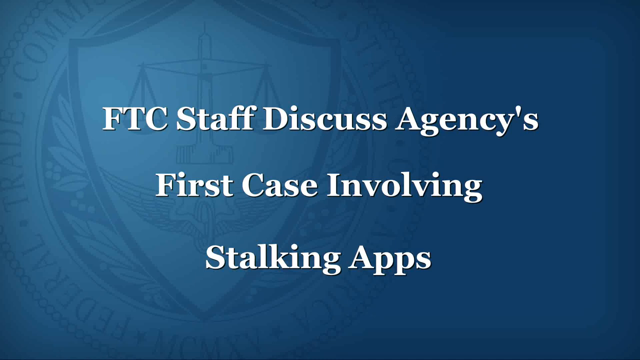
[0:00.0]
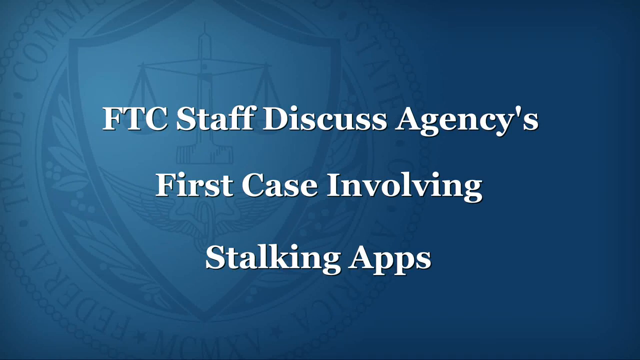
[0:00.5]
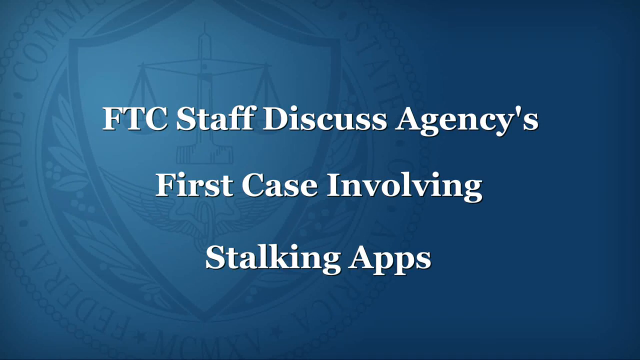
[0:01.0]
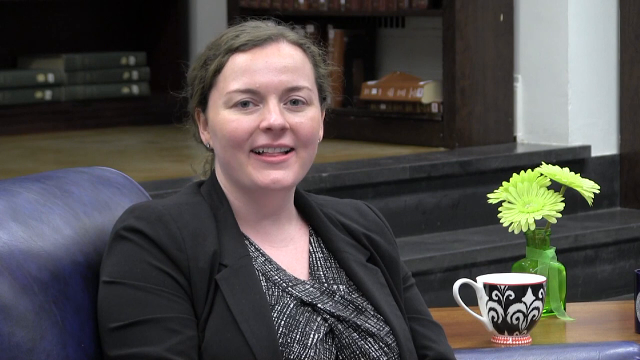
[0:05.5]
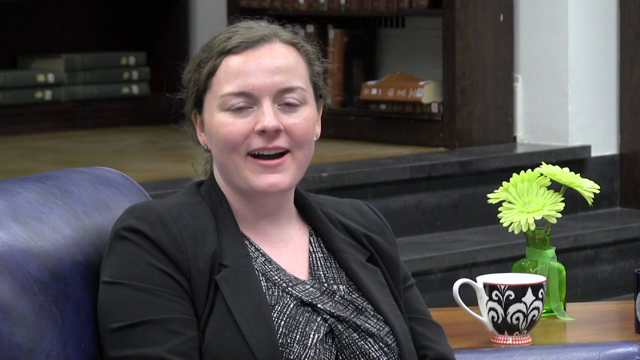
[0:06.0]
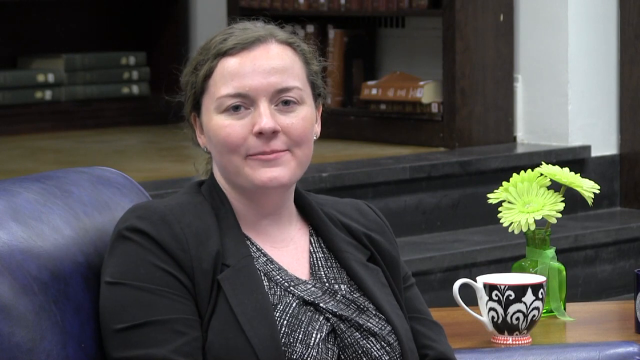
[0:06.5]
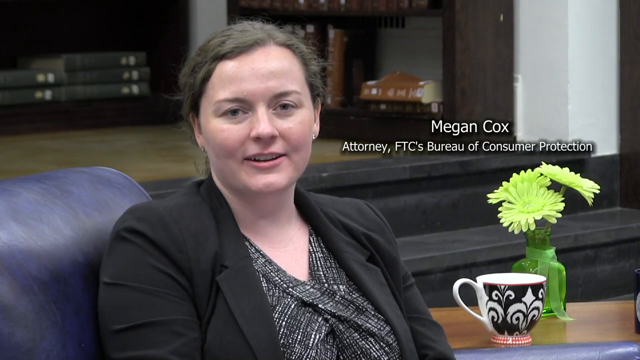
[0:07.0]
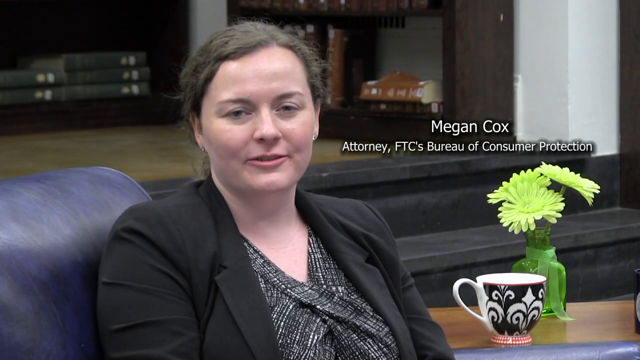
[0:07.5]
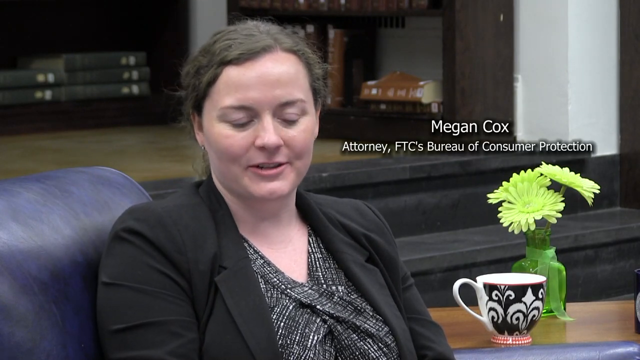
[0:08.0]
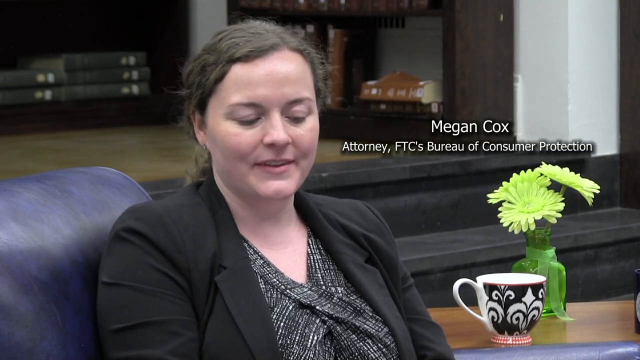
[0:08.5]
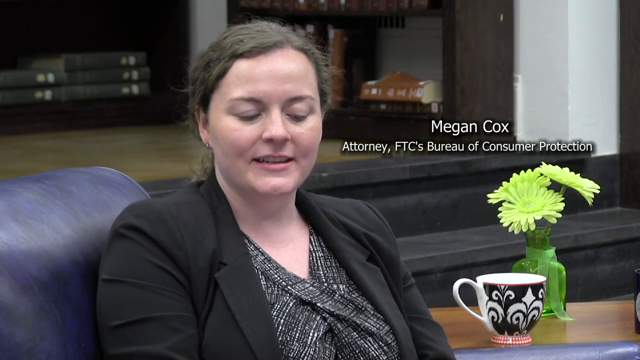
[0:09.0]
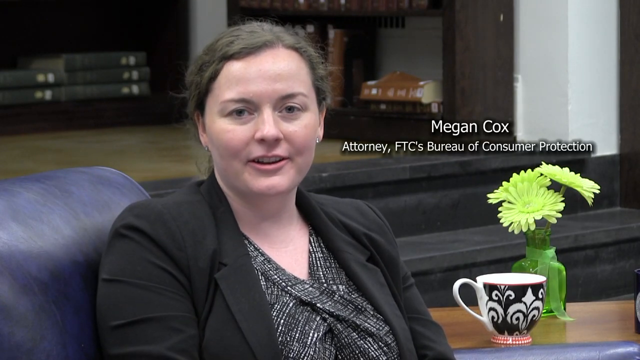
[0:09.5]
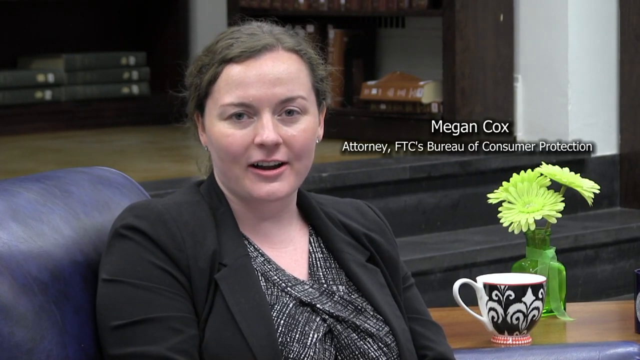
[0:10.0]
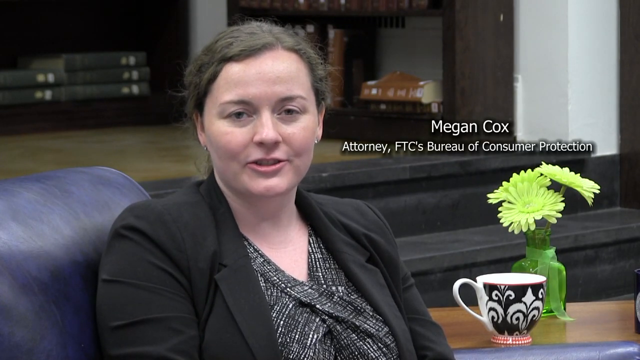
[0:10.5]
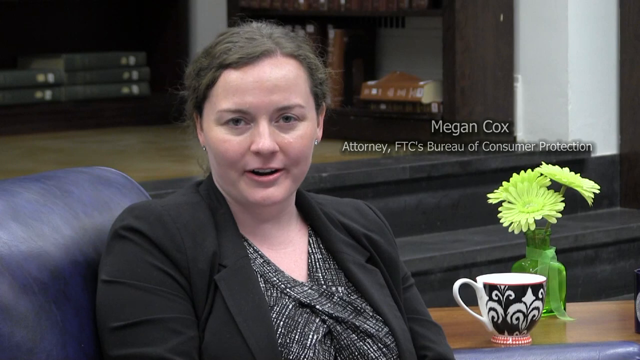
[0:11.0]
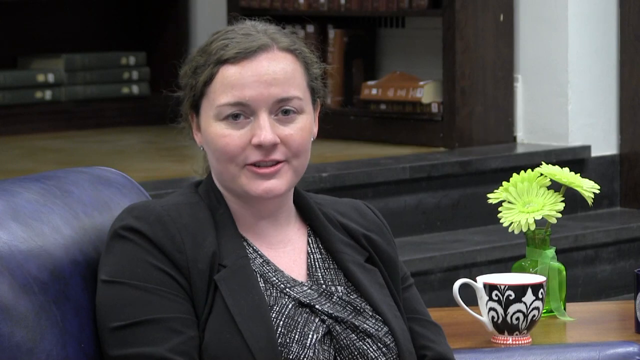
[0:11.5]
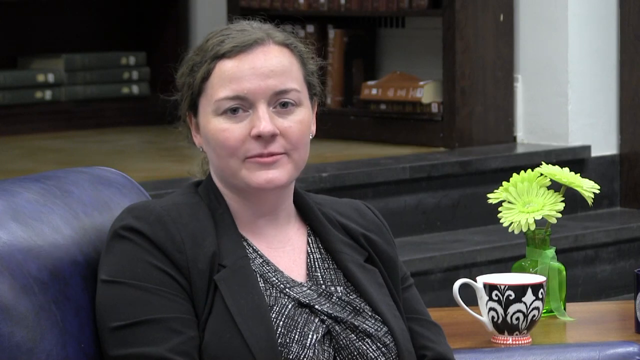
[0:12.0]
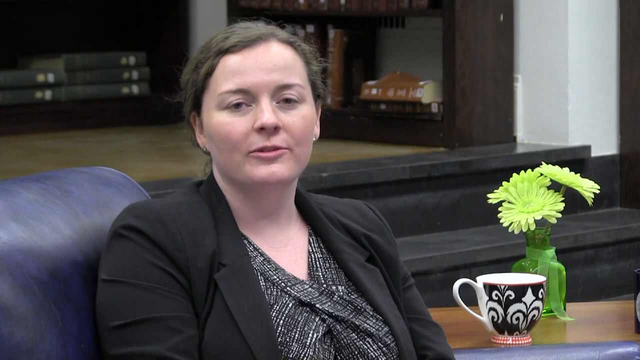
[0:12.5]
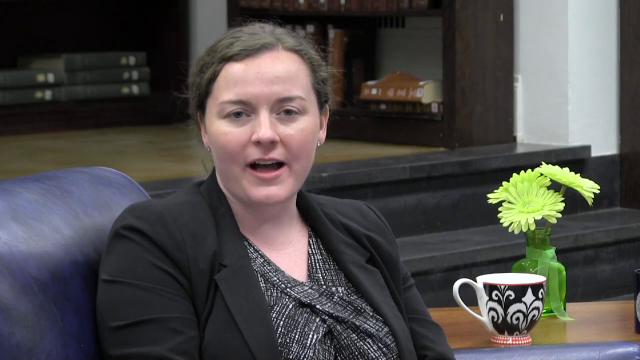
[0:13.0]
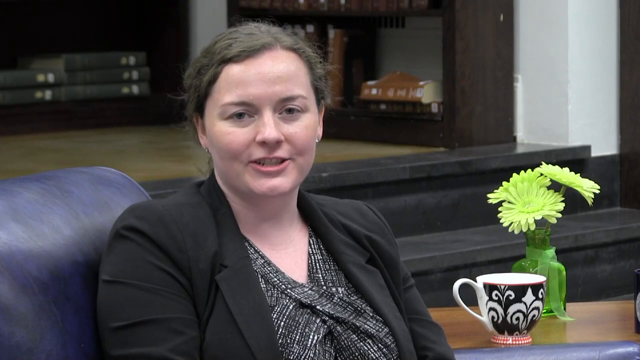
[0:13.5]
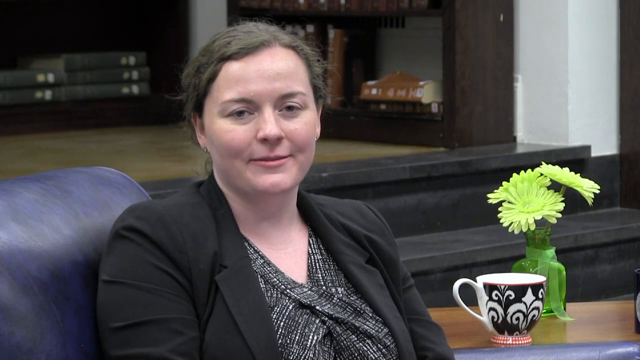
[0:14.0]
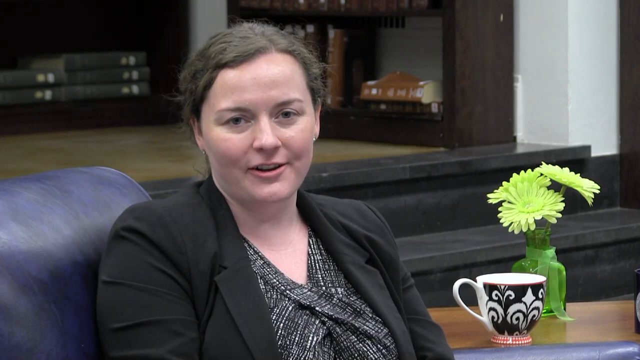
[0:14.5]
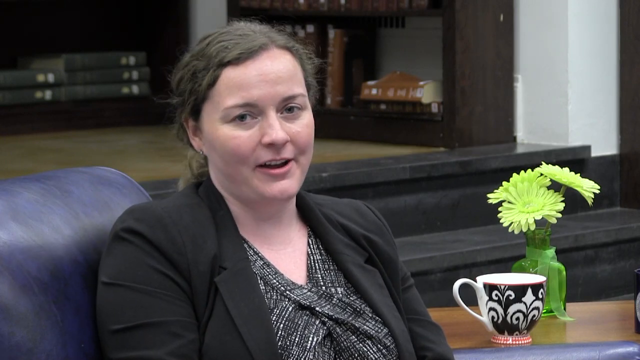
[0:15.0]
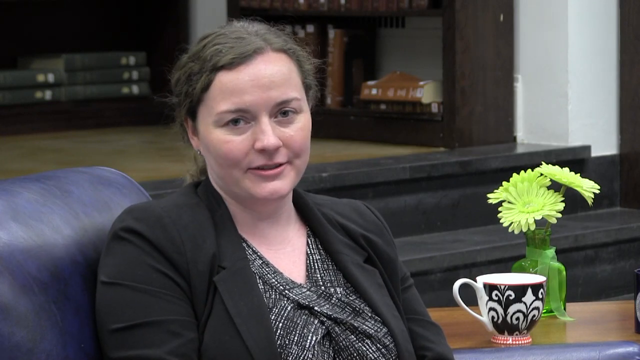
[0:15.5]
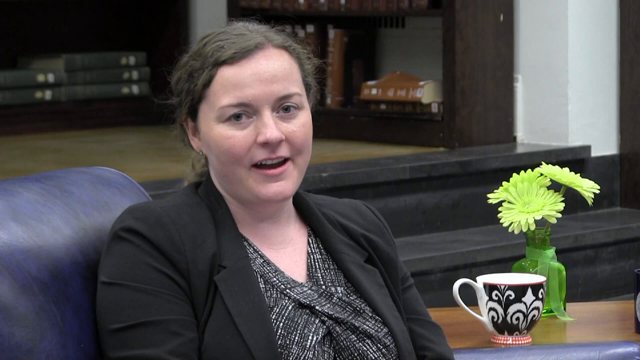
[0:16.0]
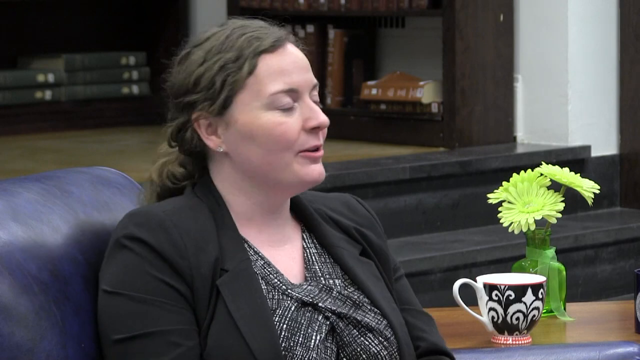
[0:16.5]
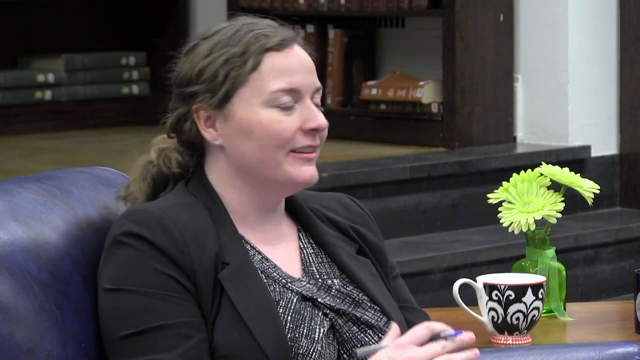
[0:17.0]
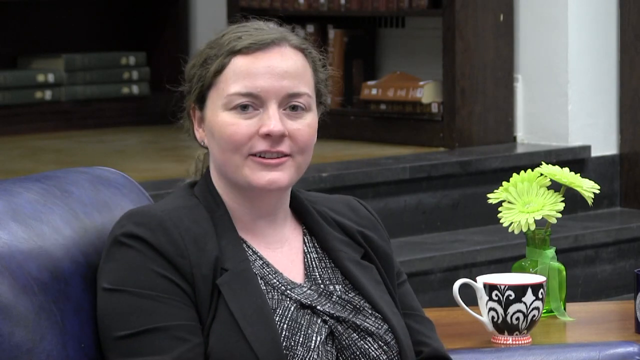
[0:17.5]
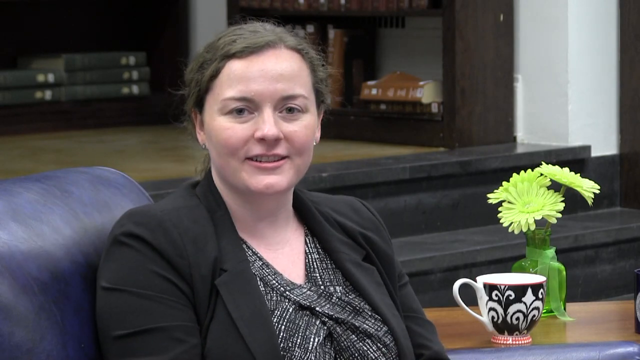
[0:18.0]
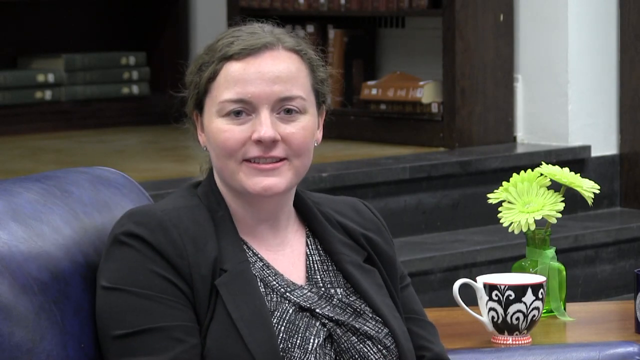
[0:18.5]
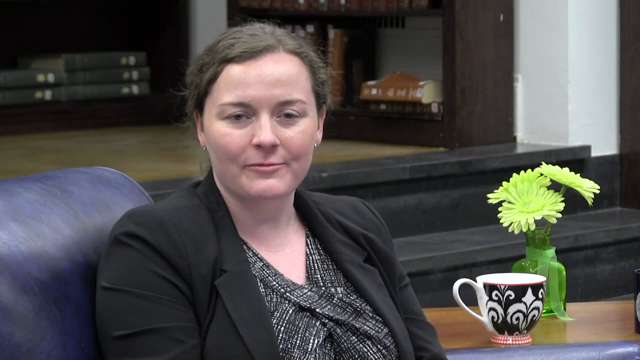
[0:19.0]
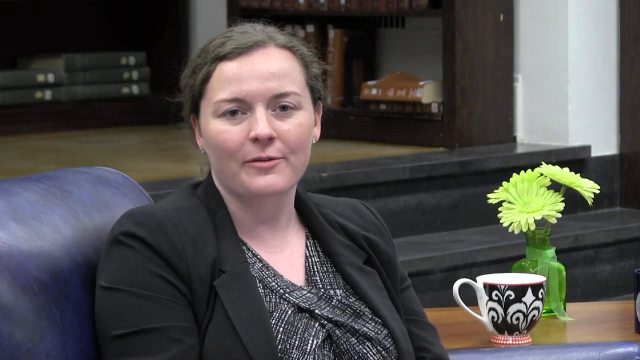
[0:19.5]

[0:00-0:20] Text on a blue background reads "FTC staff discusses agencies first case involving stalking apps." In the background there is what looks like legal imagery, apparently an official seal of some kind, possibly from a trade commission, and the words "United States" are visible in the background.